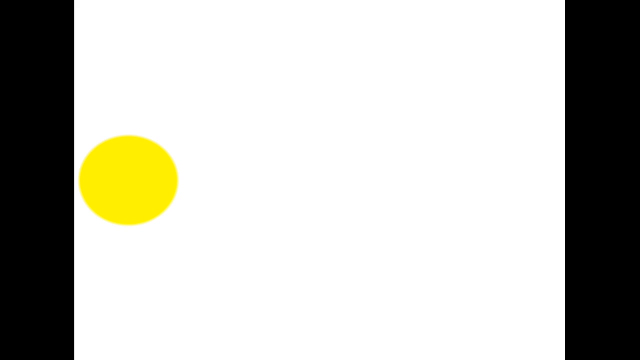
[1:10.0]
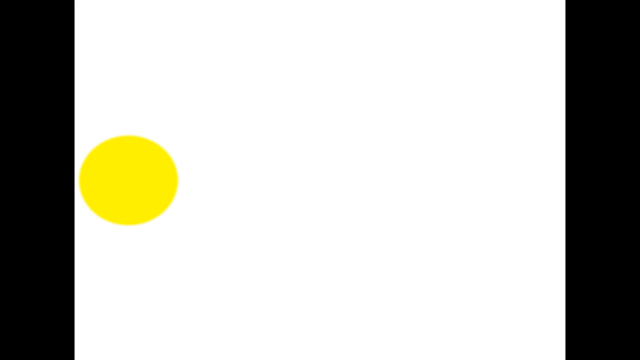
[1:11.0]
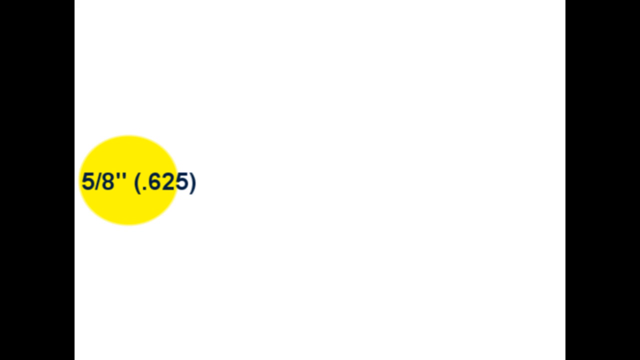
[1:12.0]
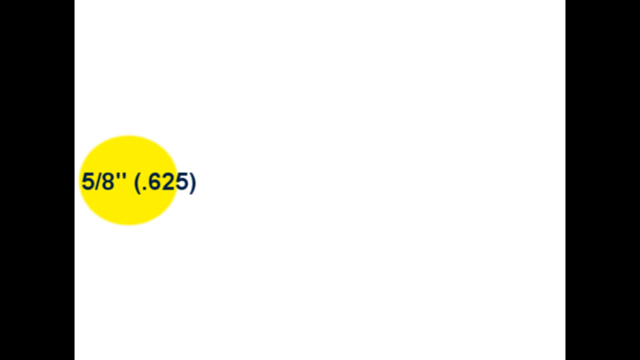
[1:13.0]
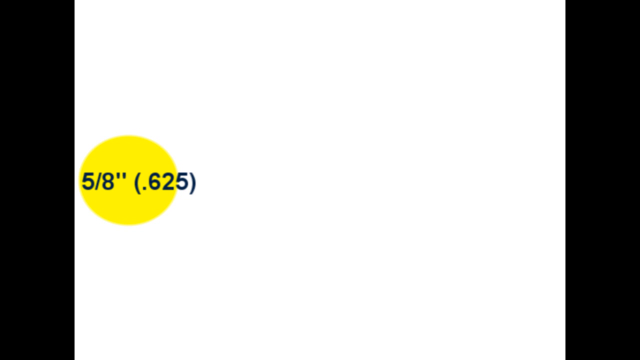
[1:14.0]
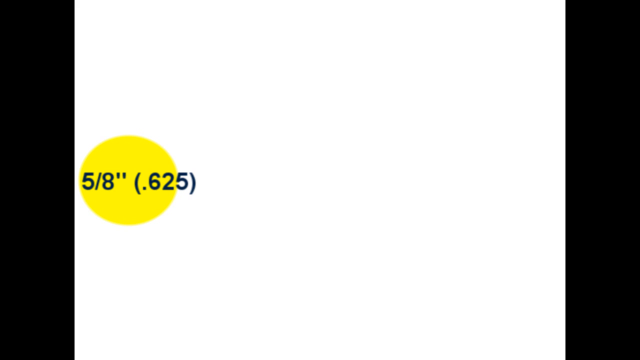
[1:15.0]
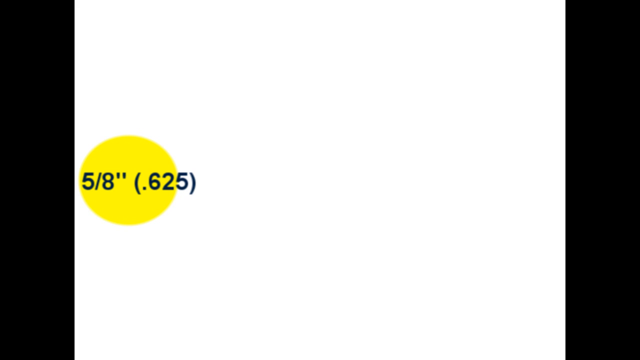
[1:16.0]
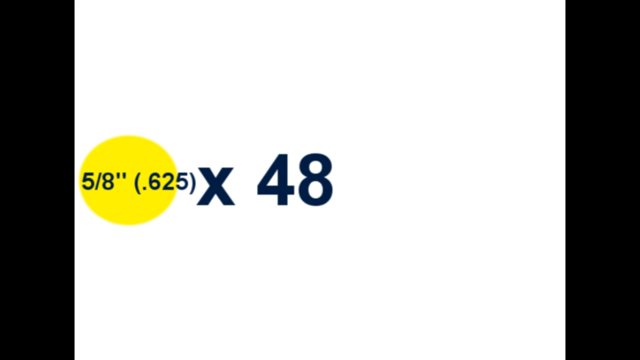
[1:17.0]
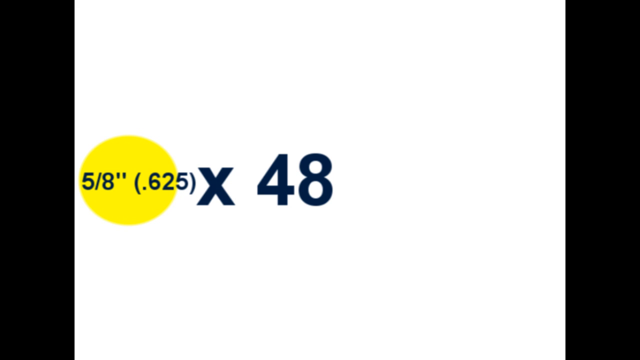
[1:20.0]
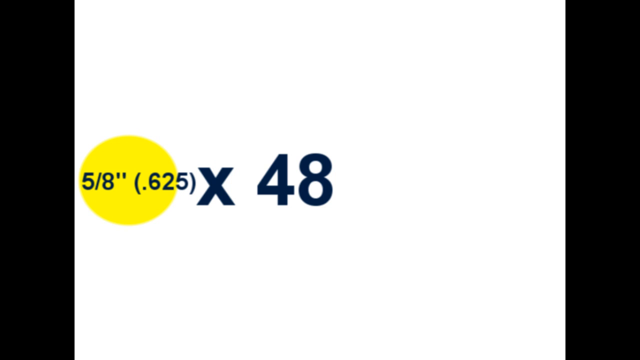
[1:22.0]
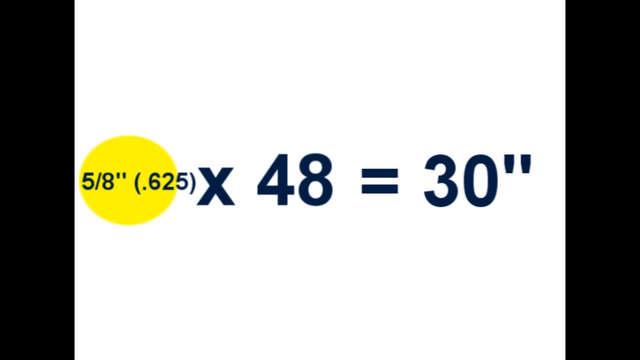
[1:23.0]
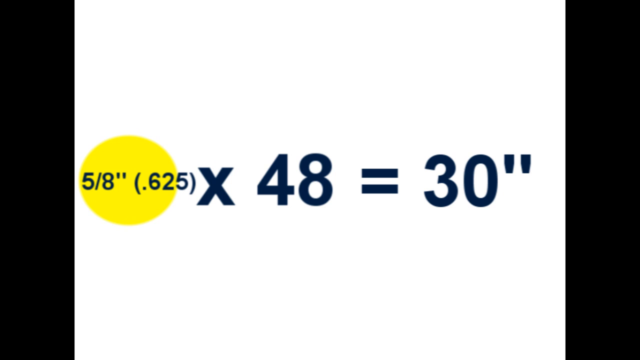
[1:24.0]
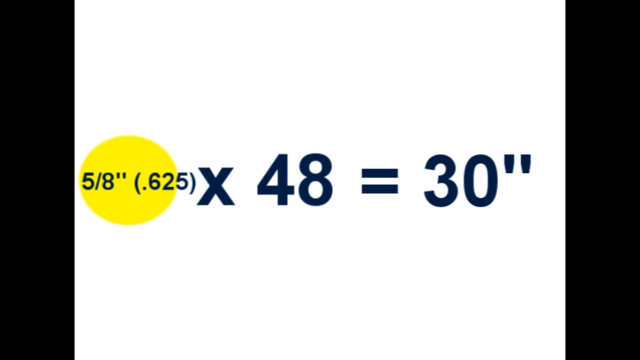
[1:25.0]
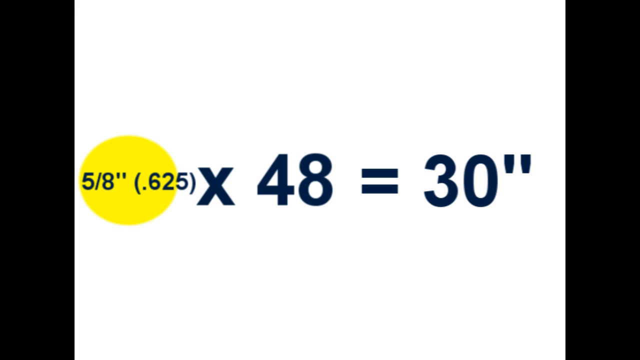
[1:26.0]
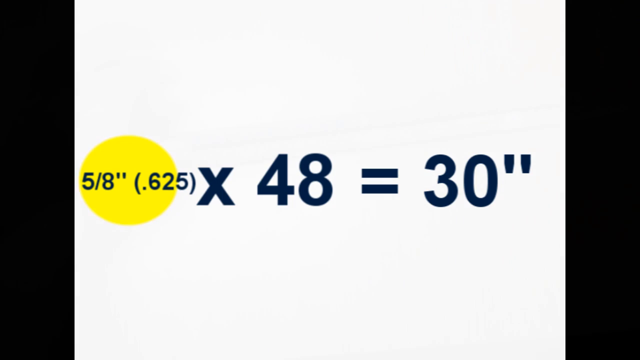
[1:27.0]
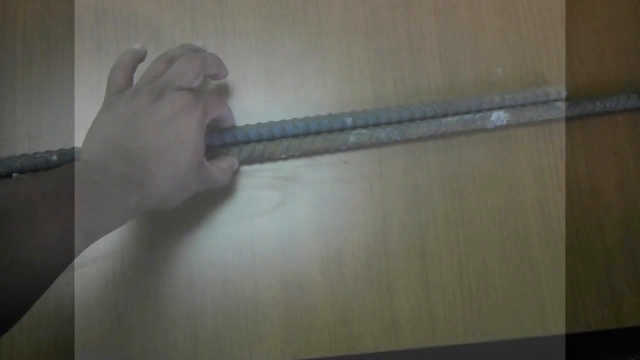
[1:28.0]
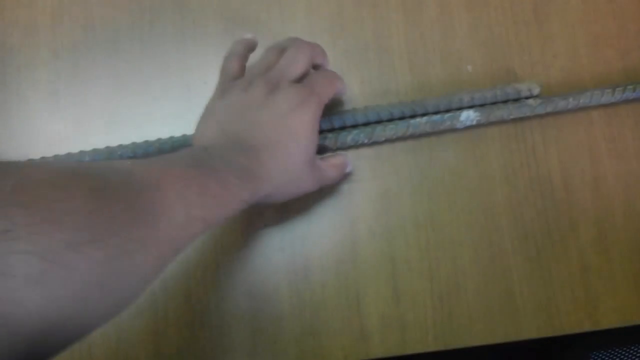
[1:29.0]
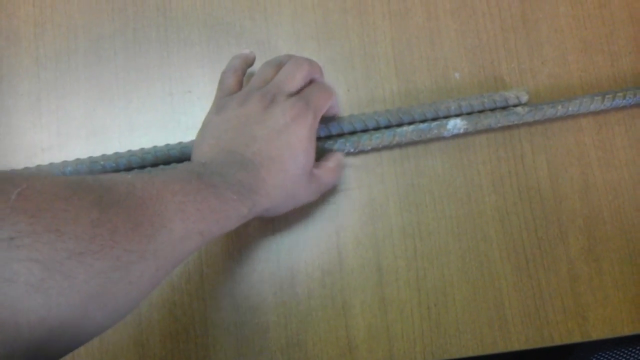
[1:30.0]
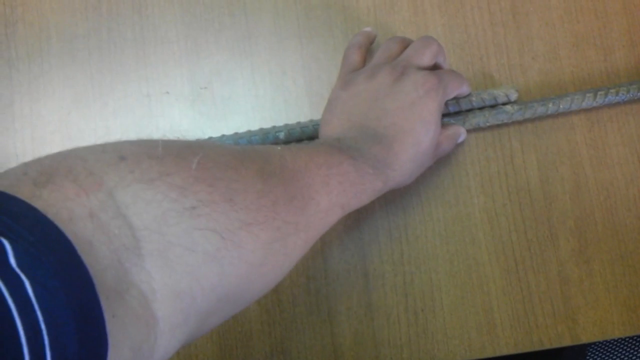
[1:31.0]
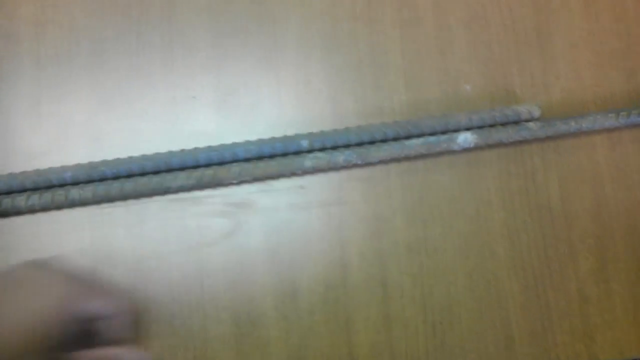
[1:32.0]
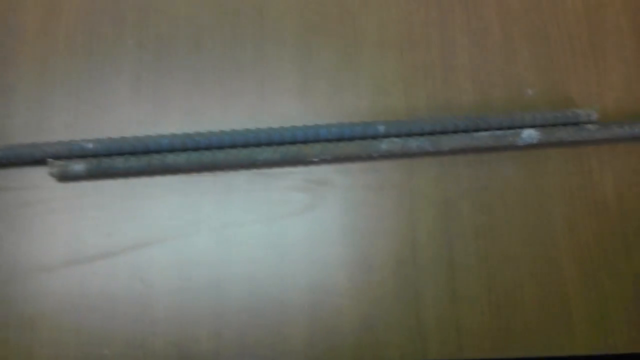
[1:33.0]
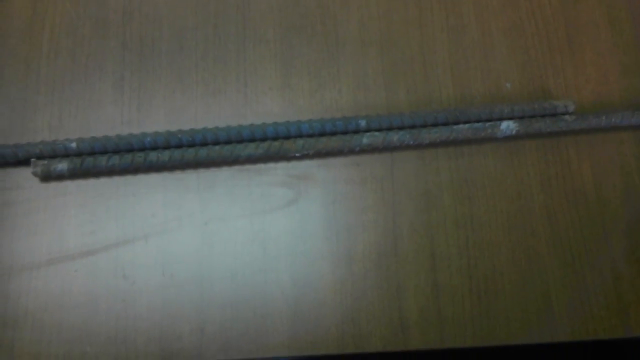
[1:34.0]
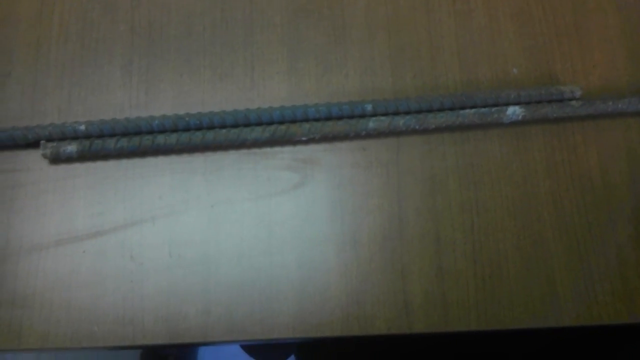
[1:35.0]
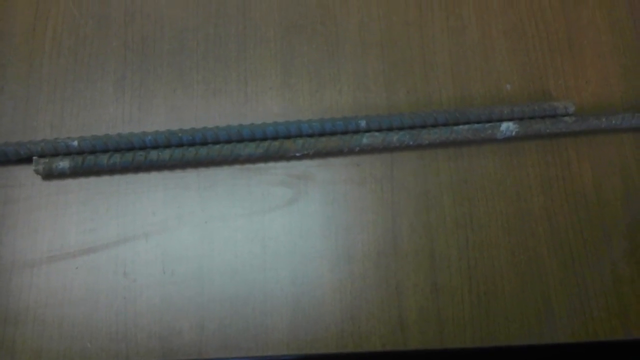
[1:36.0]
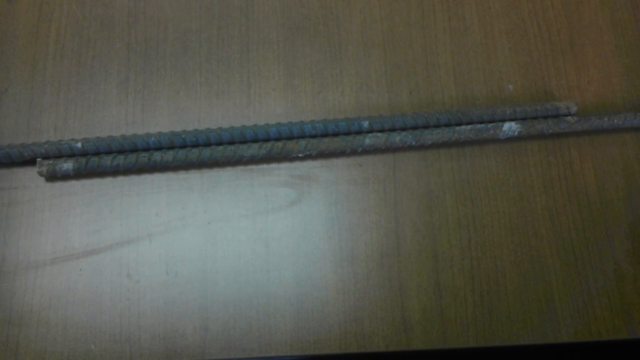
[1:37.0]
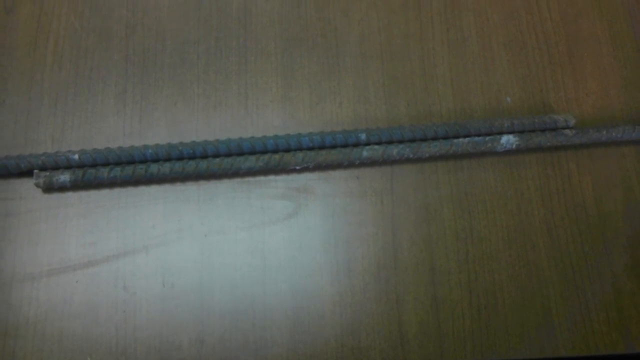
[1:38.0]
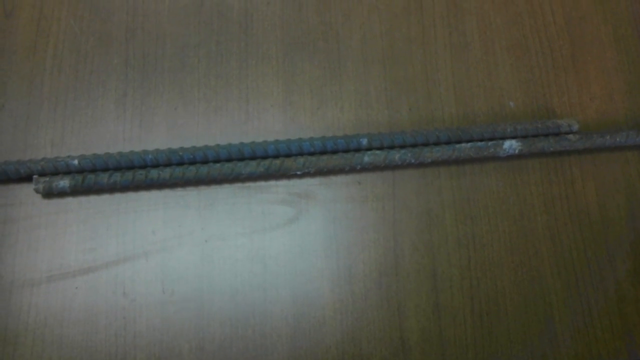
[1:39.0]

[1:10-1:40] The whole screen is a white field with a yellow circle positioned on the left-hand side of the frame. After a few seconds, "5/8"" and "(0.625)" appear in black sans-serif text. A few seconds later "X 48" appears in a bigger font size, and a few seconds after that "= 30"". The graphic then dissolves into two pieces of rebar, one coming in from the left-hand side of the screen and one from the right, meeting in the center of the frame on a wooden table seen from above. The camera shakes a little as an arm extended from the left-hand side of the frame pinches off intervals along the two rebar pieces together. It makes three pinches like this, apparently measuring off segments of the rebar. The hand then pulls away, leaving just the two pieces of rebar on the table. The camera moves around a little, as it appears to be a handheld phone camera.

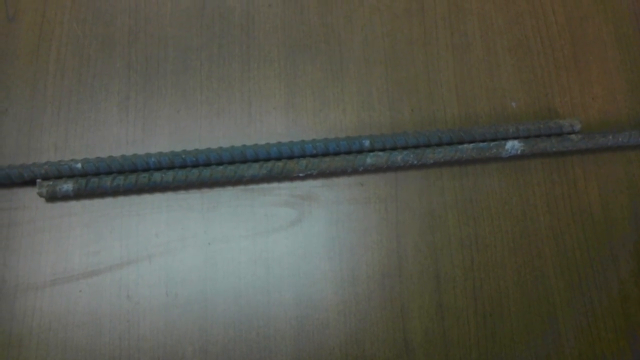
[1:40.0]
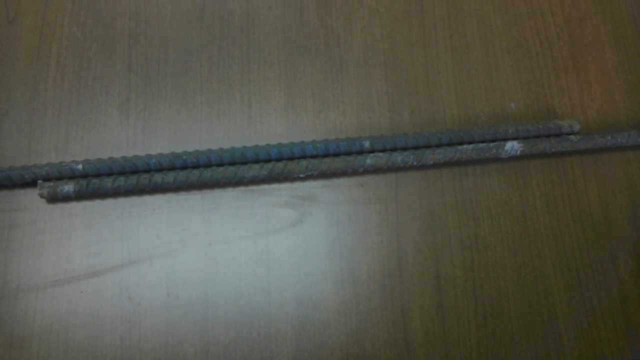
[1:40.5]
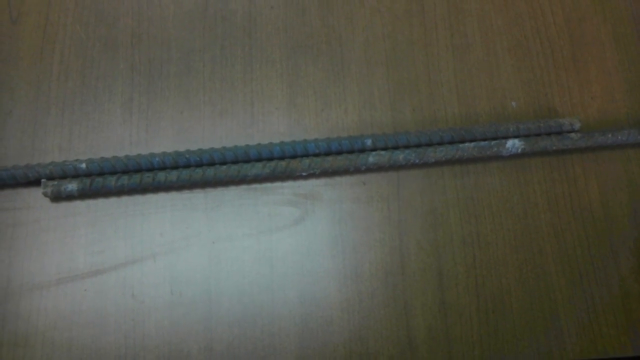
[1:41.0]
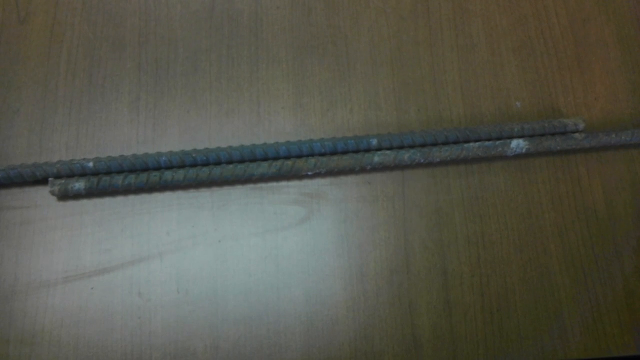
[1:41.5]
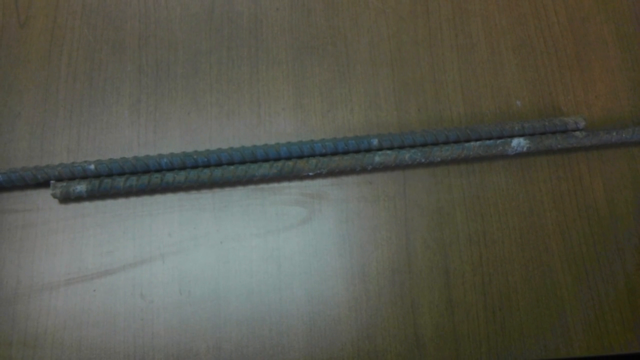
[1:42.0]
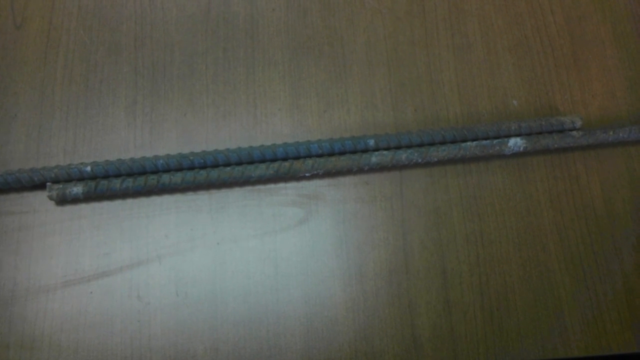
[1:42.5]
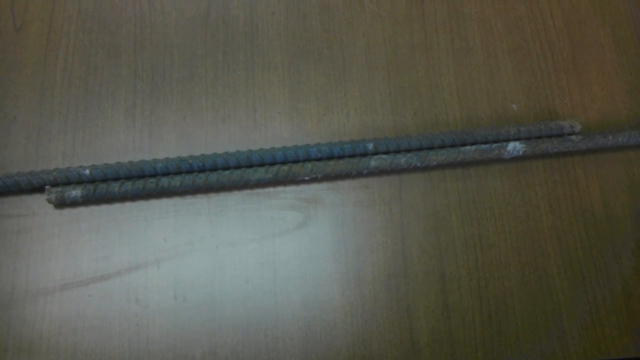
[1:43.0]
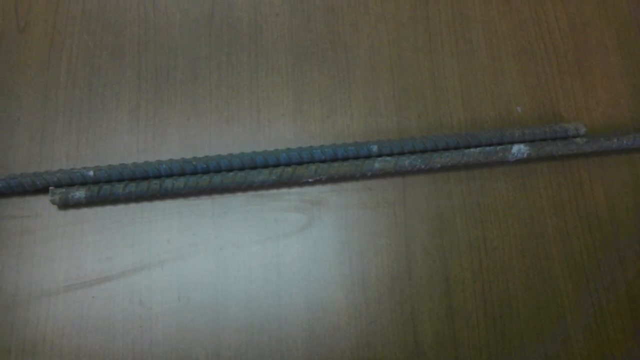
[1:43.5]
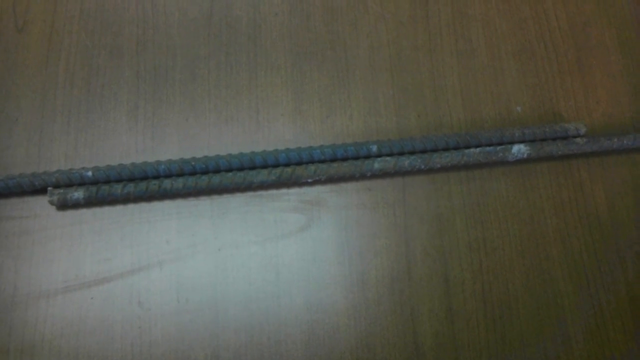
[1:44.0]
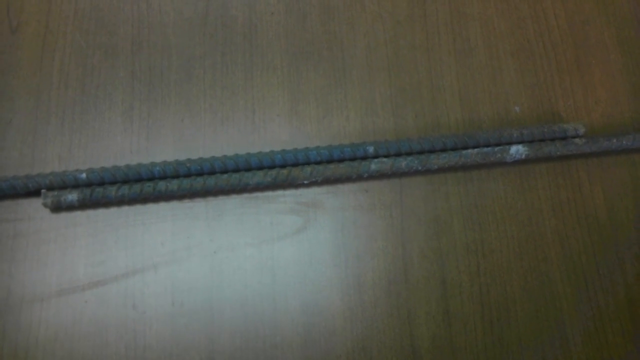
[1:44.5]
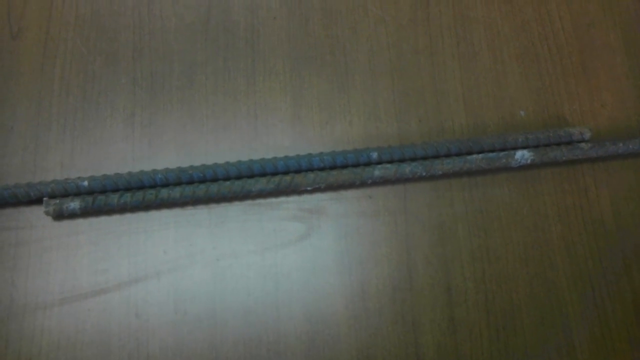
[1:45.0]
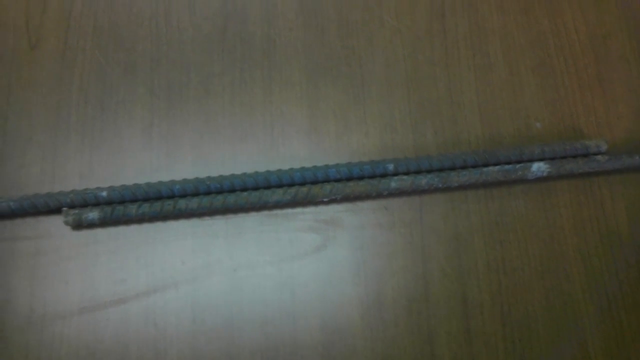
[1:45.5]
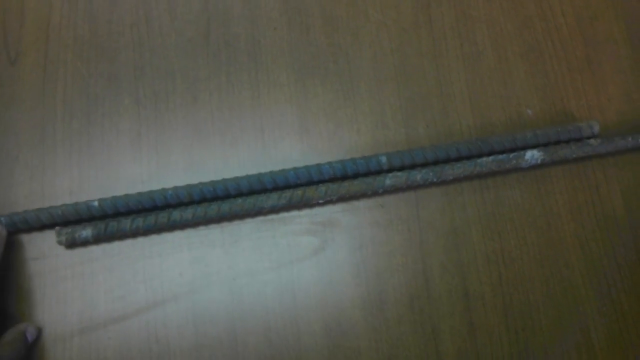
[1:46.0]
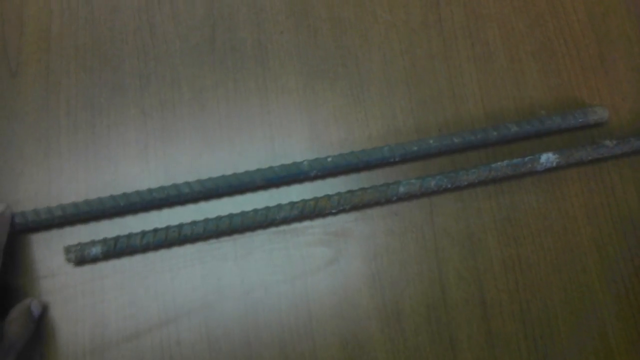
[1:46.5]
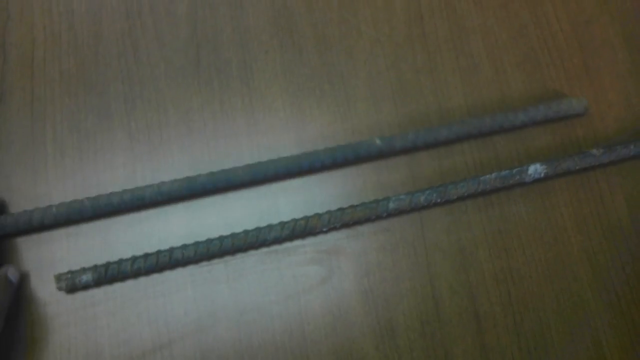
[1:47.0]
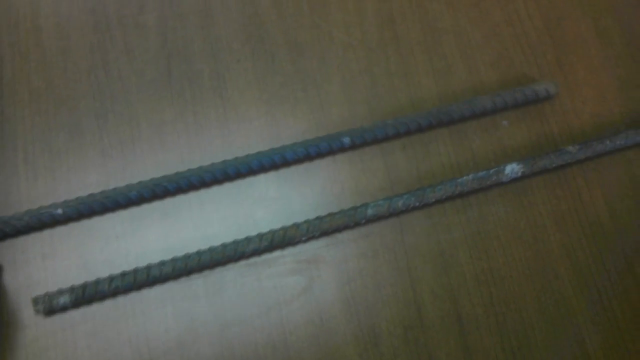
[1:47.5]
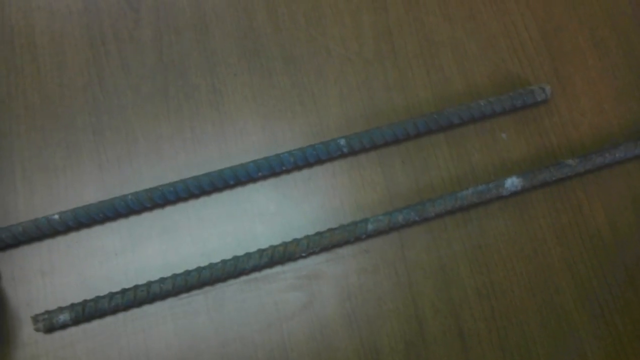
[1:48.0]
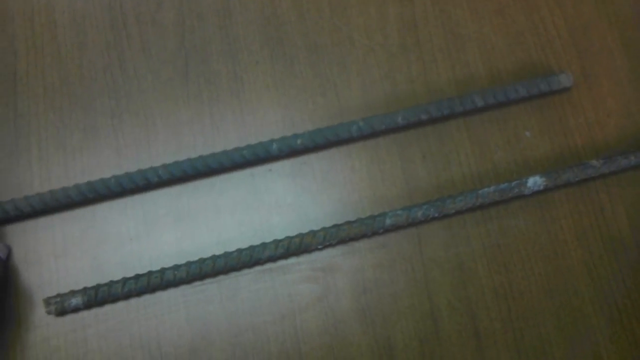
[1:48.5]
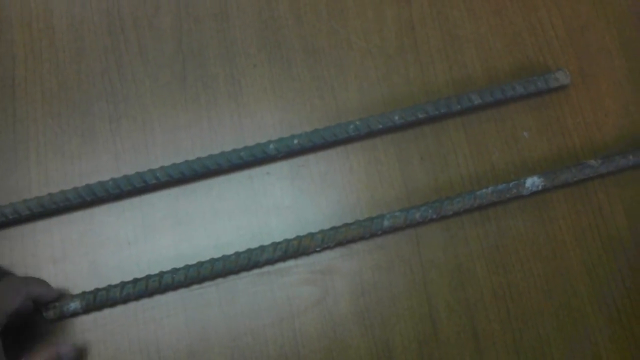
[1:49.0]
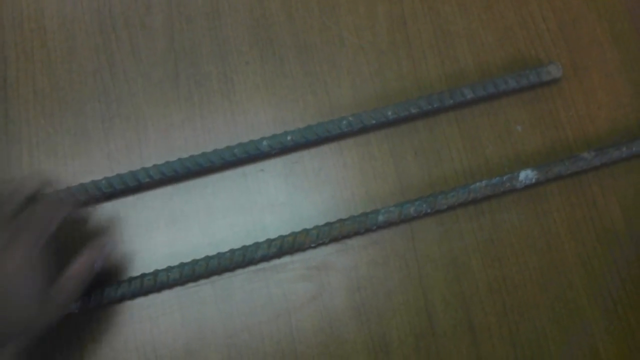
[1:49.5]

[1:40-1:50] Two pieces of rebar are on a wooden table with a wood-grain finish, seen from above, with the glare of an overhead lamp on the table. The handheld camera shakes a little. The two pieces are sort of centered in the frame, one coming from the left-hand side and the other from the right-hand side, sort of right next to each other in the center. A hand comes in from off the left-hand side of the frame, grabs the top piece of rebar and rolls it, perhaps so that the other side of the rebar can be examined. The hand then touches the bottom piece momentarily, goes back to the top piece that had been rolled, and pinches it very briefly.